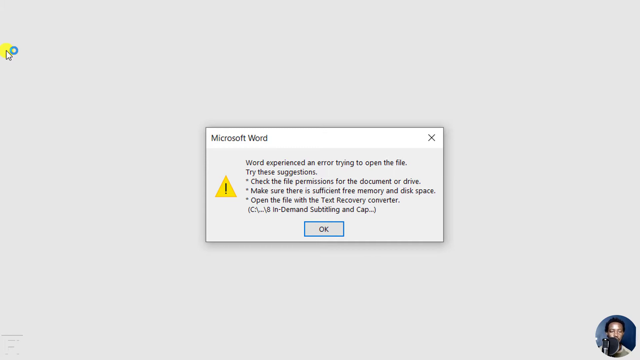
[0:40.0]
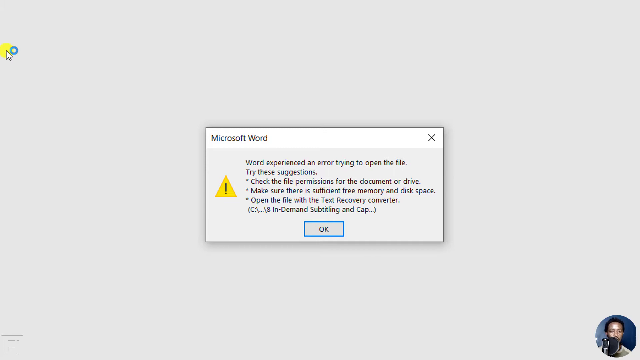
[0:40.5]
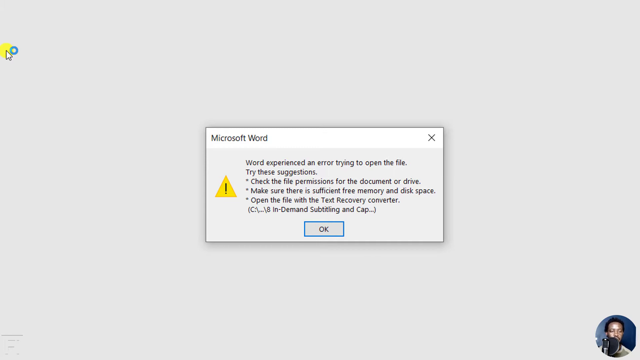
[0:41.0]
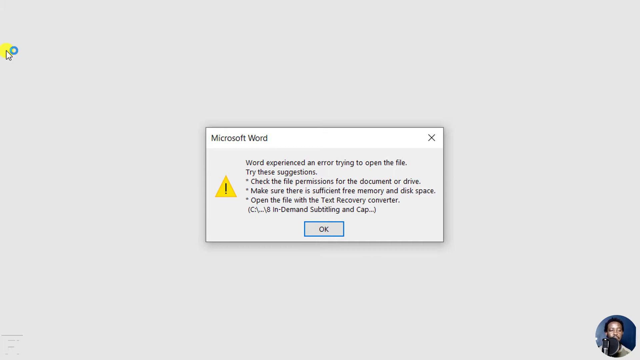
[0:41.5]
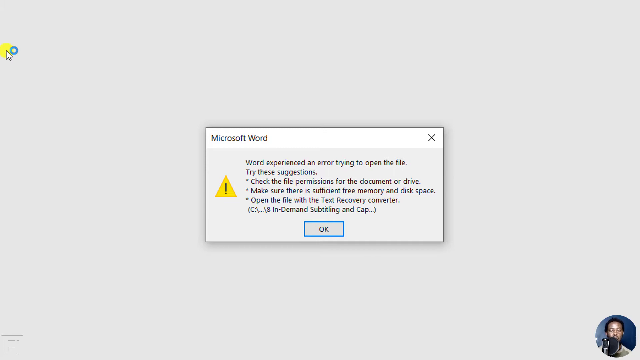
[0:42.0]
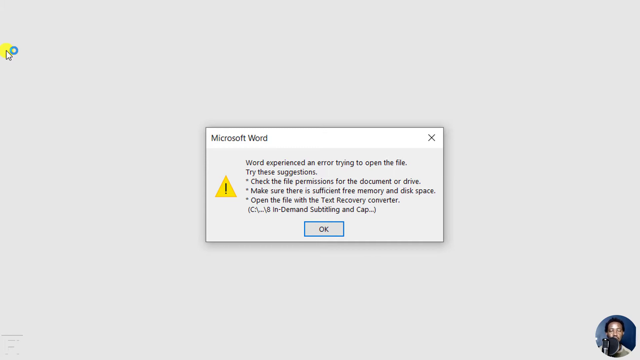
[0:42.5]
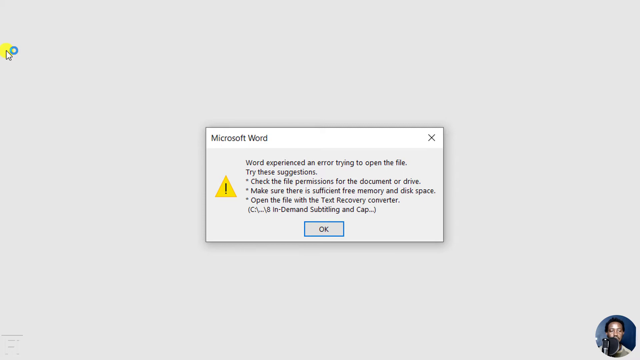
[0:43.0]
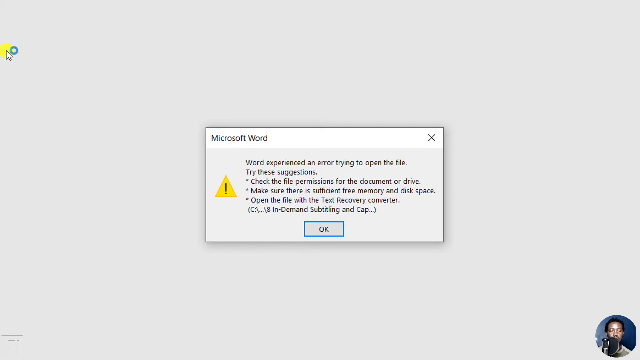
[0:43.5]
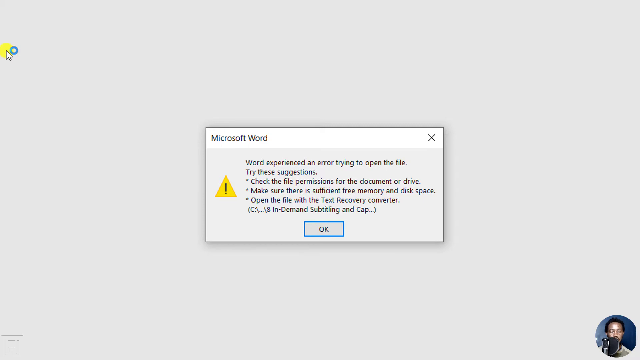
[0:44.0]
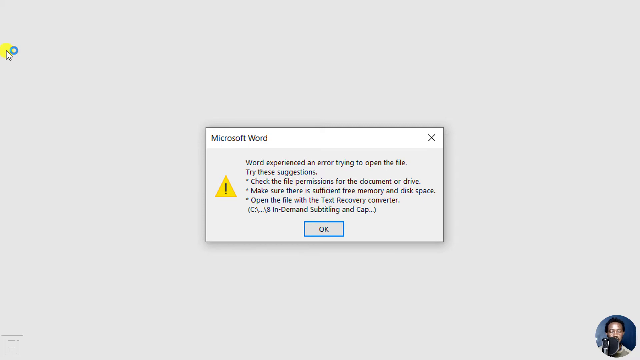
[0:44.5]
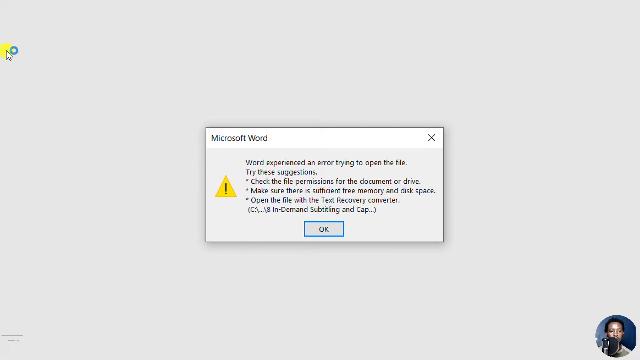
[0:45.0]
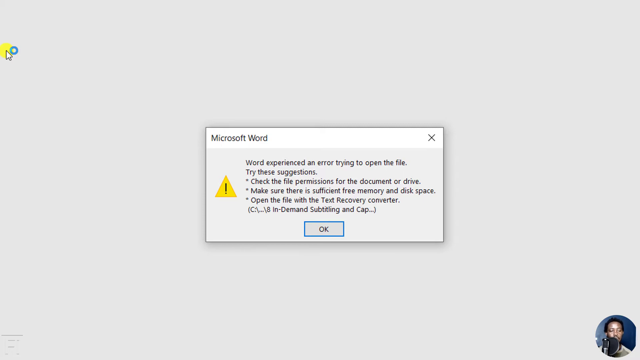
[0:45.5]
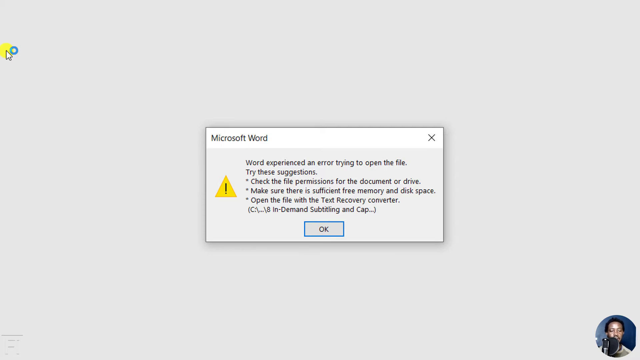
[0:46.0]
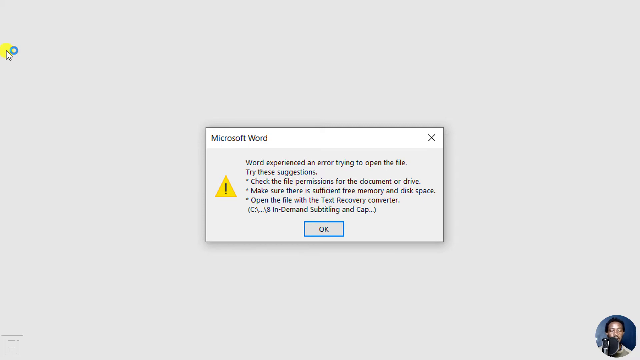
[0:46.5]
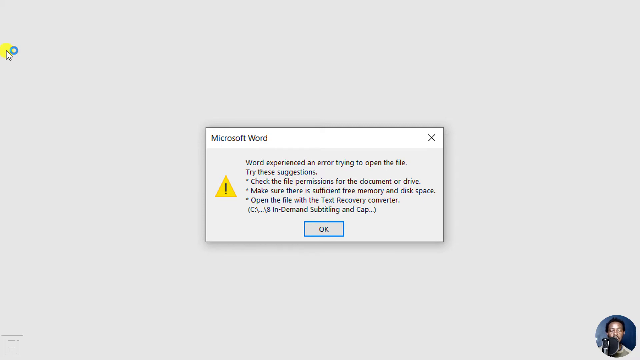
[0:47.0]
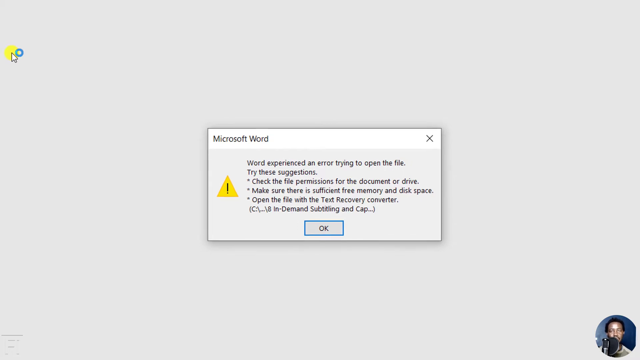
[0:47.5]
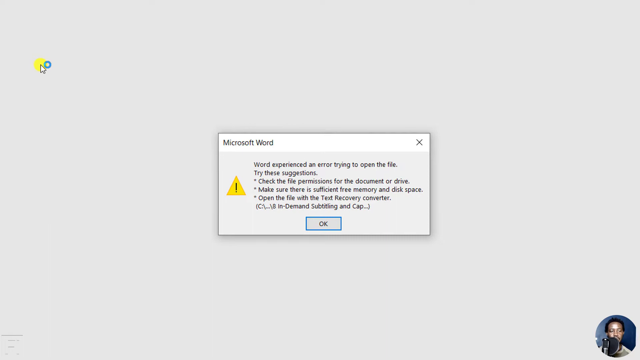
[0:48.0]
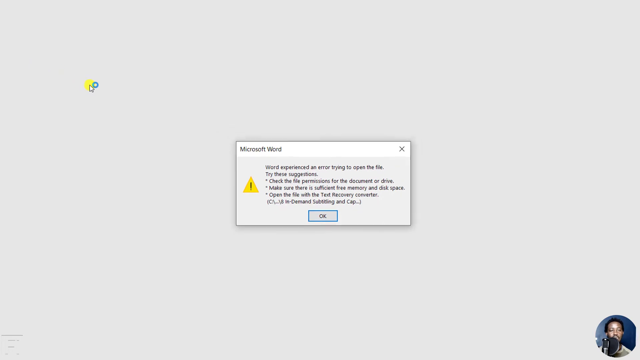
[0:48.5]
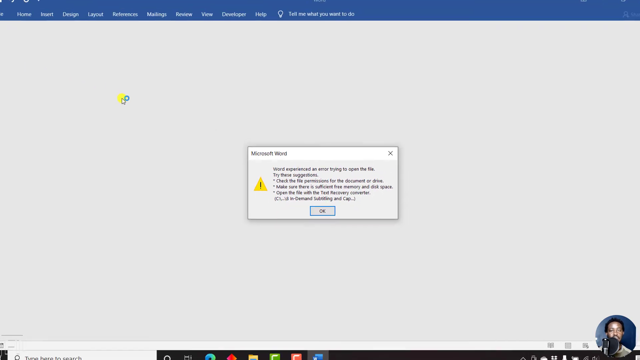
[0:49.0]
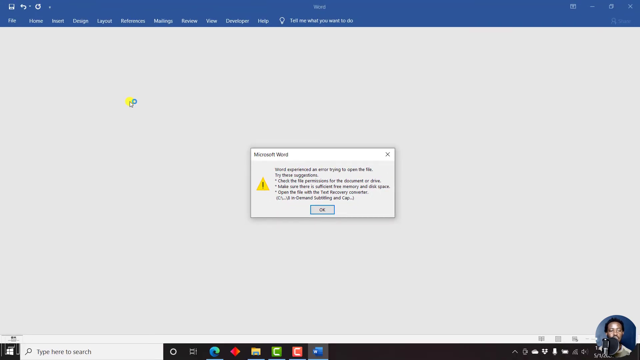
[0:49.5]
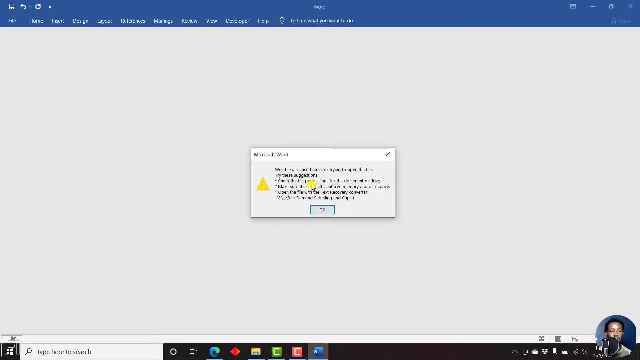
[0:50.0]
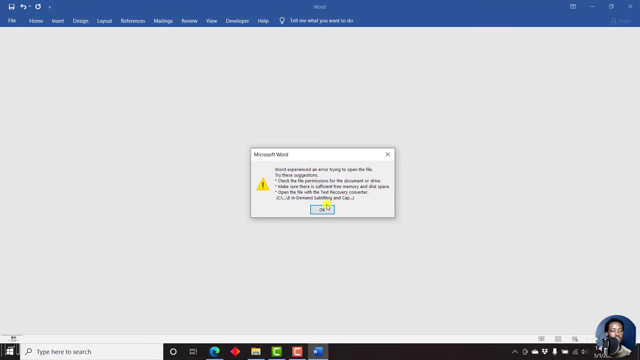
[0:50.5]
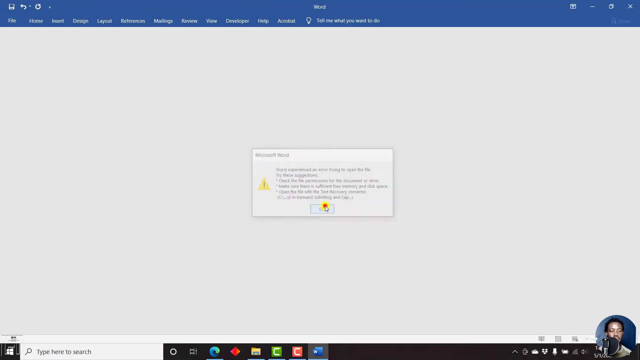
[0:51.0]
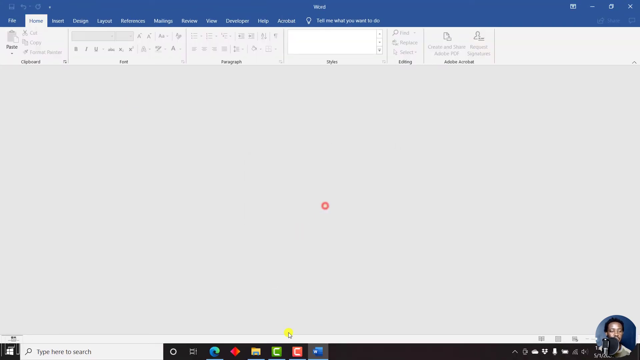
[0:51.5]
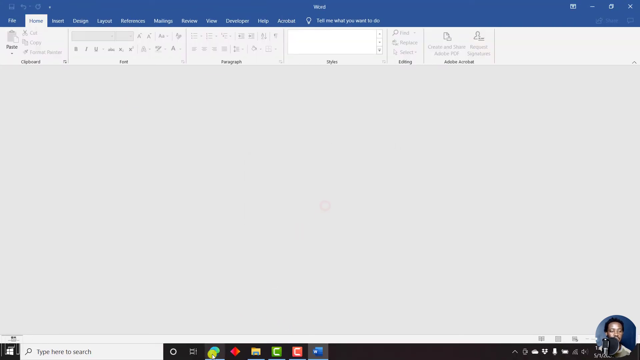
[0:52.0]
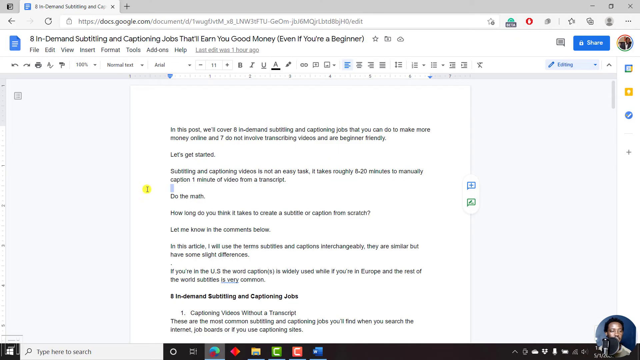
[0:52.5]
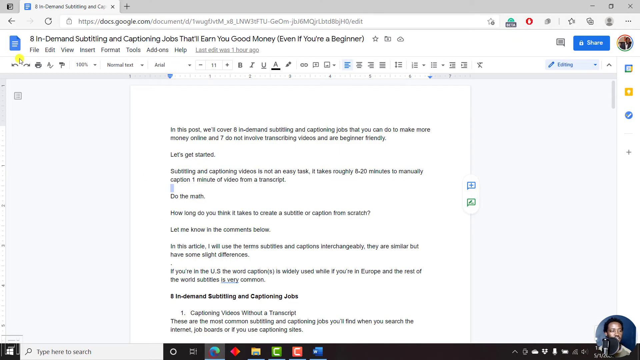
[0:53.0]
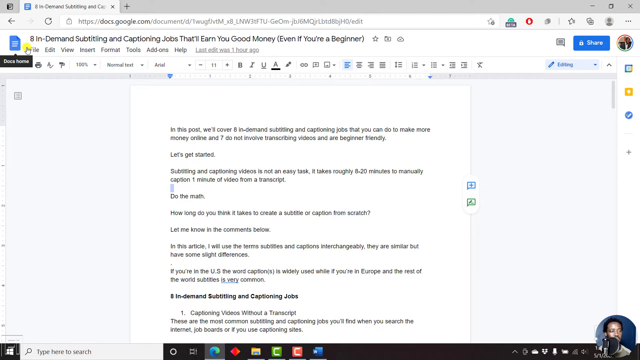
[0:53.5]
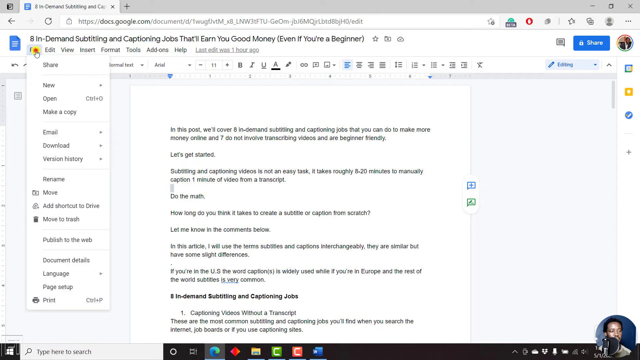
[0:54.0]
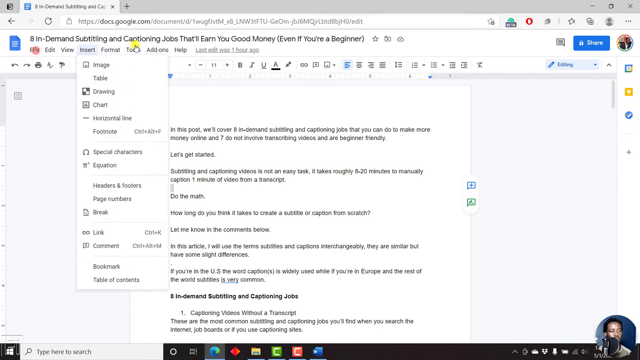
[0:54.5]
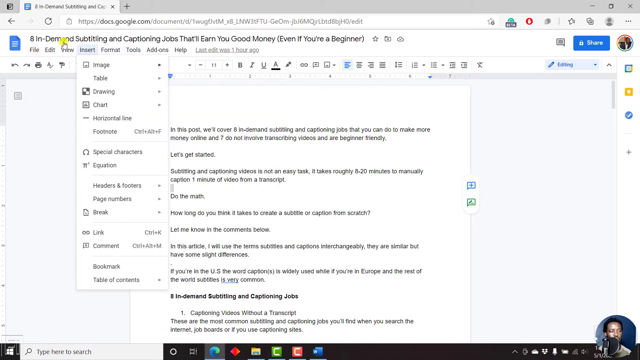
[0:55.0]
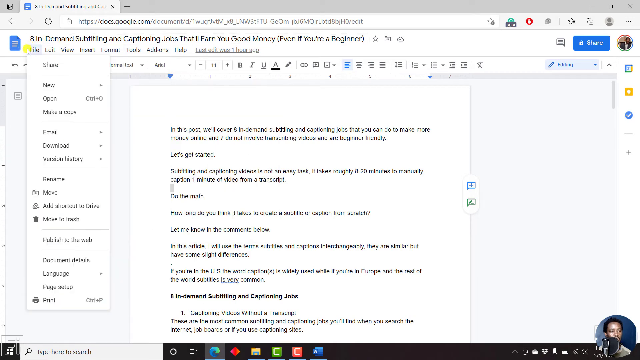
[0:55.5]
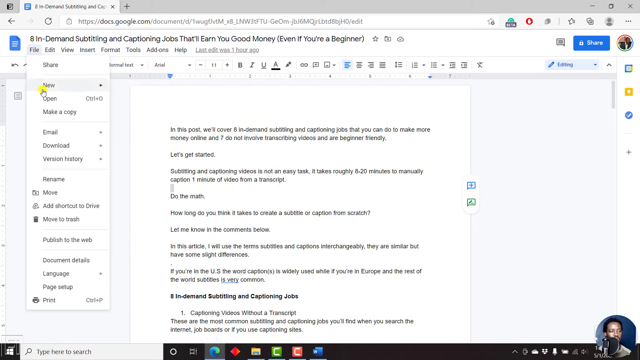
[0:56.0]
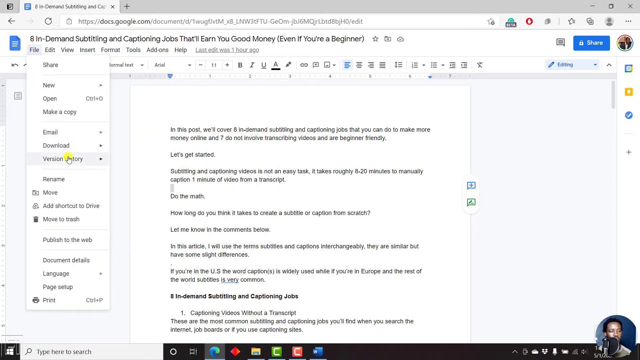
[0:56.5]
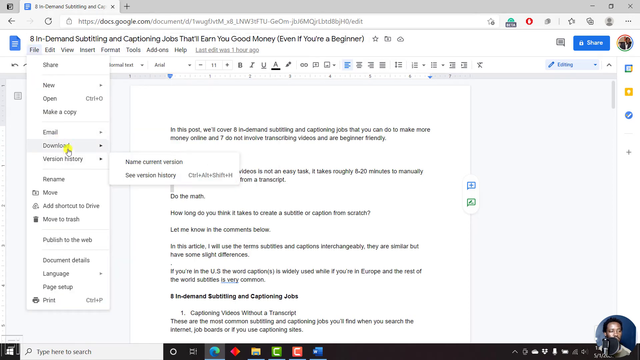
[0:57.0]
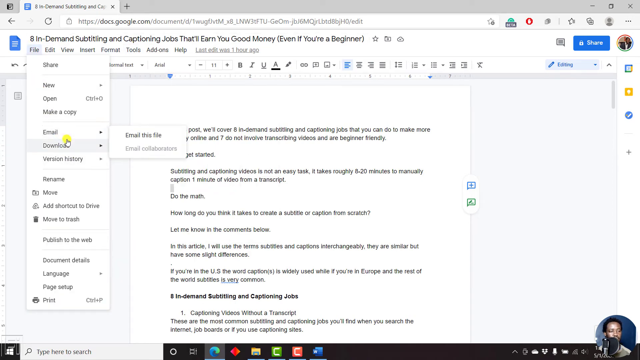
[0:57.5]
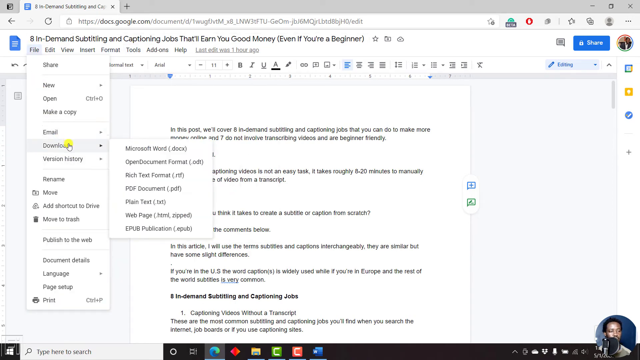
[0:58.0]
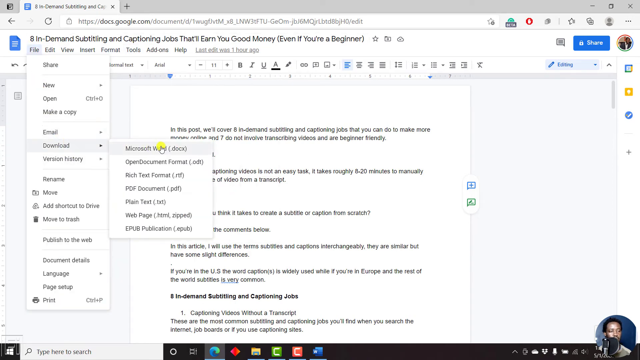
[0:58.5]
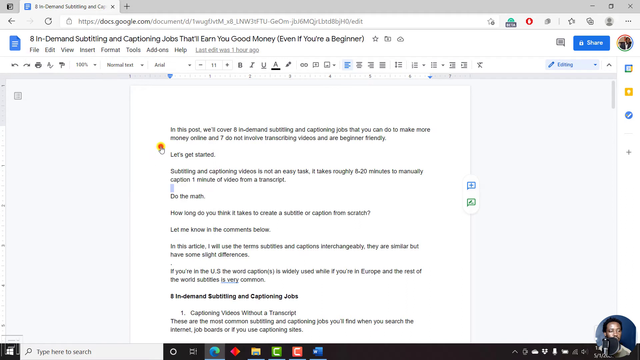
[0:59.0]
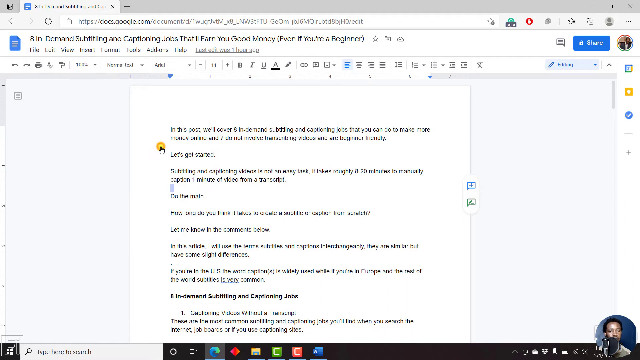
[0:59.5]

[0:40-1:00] An error message from the Microsoft Word program is on screen. The cursor, in the top left-hand corner, has something like a yellow highlighted circle over it. The error screen says "Word experienced an error trying to open the file. Try these suggestions. Check the file permissions for the document or drive. Make sure there is sufficient free memory in disk space and open the file with a text recovery converter." Below is an OK button that can be selected. A picture of the man in a circular shape is in the bottom right-hand corner; it looks like he is speaking into a studio microphone. The person moves the cursor to the middle and clicks the OK button, and the Word program closes. The Google document reappears in the internet browser. The cursor moves over options such as File, a drop-down menu appears, the cursor moves down to Download, and he clicks on another button.